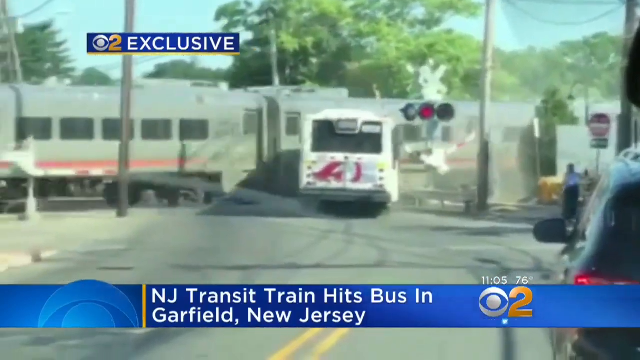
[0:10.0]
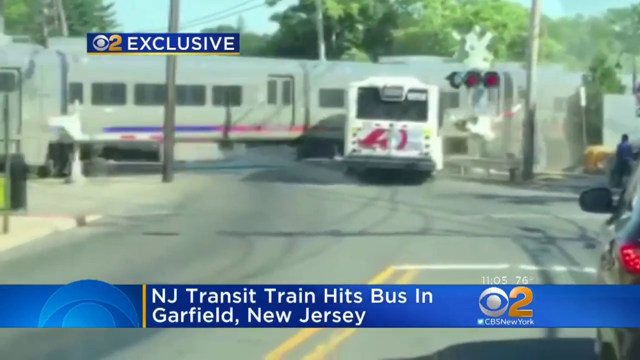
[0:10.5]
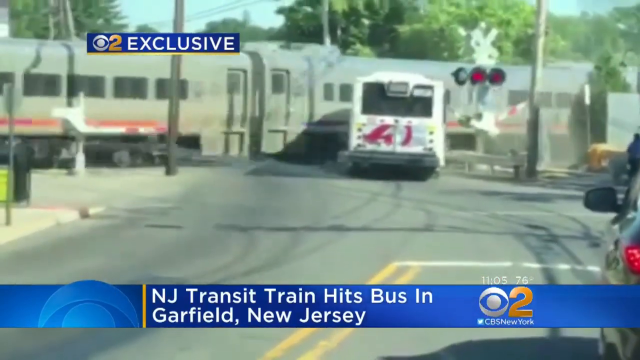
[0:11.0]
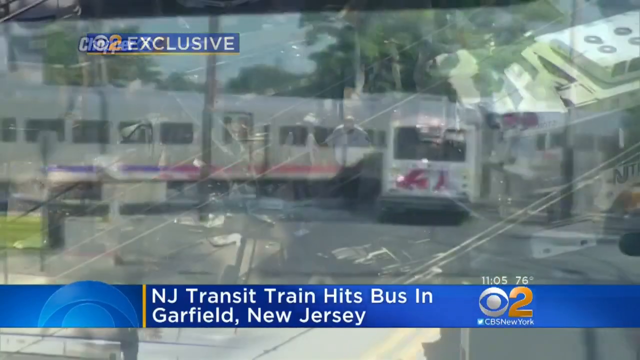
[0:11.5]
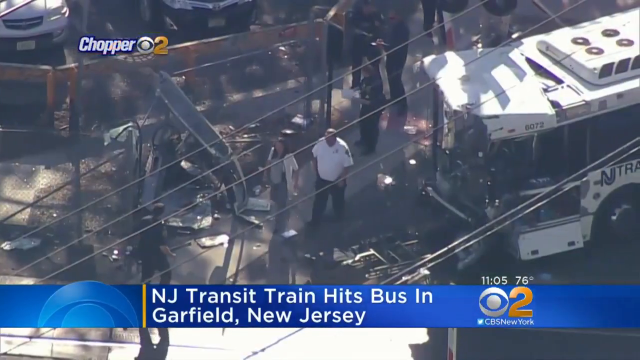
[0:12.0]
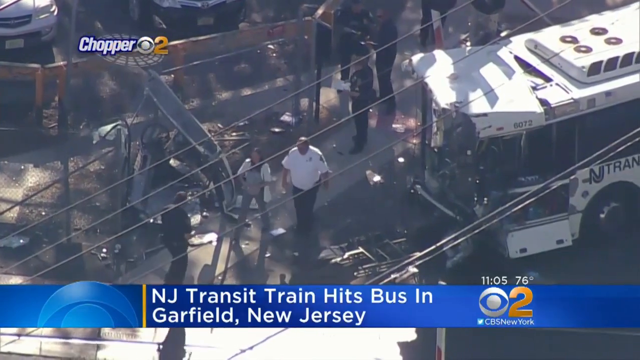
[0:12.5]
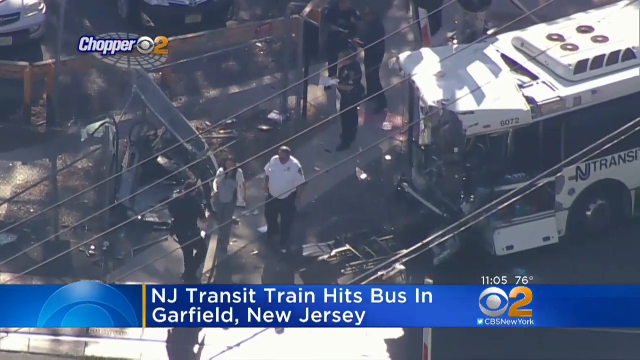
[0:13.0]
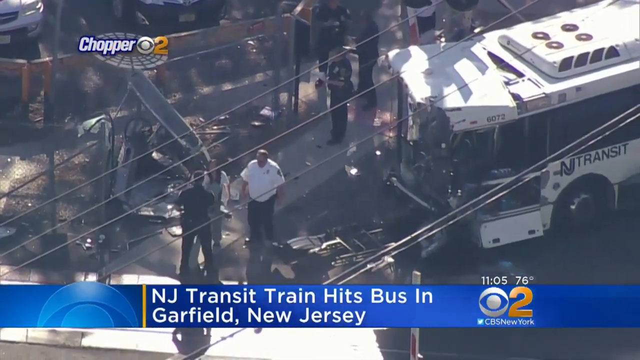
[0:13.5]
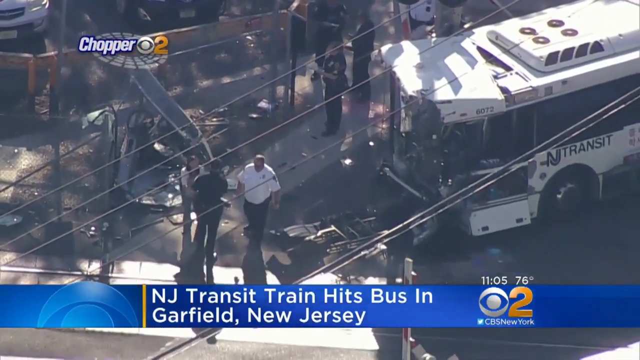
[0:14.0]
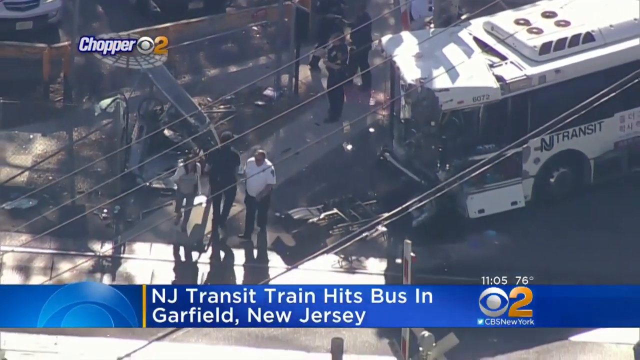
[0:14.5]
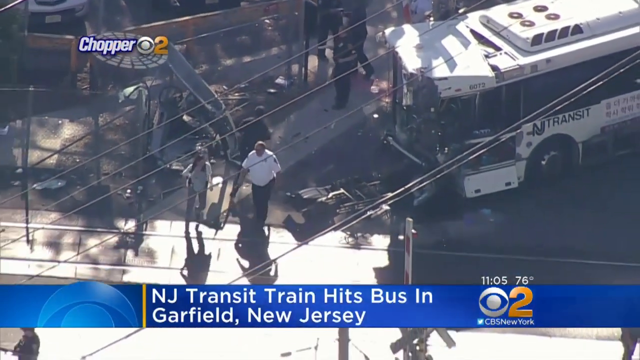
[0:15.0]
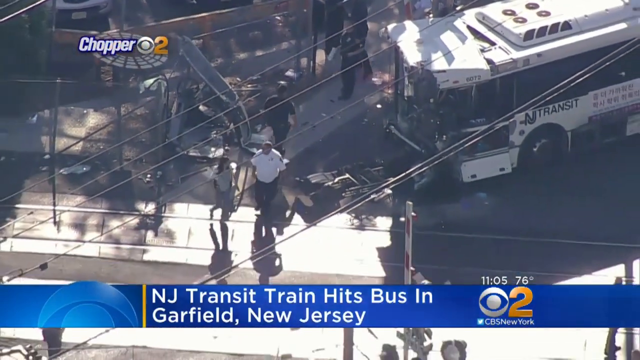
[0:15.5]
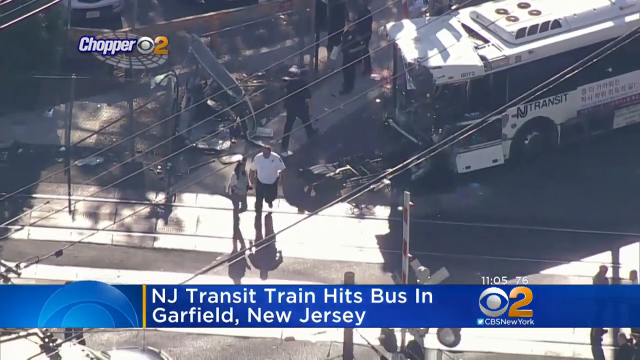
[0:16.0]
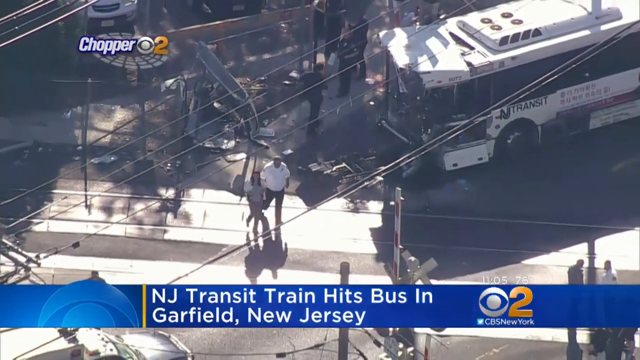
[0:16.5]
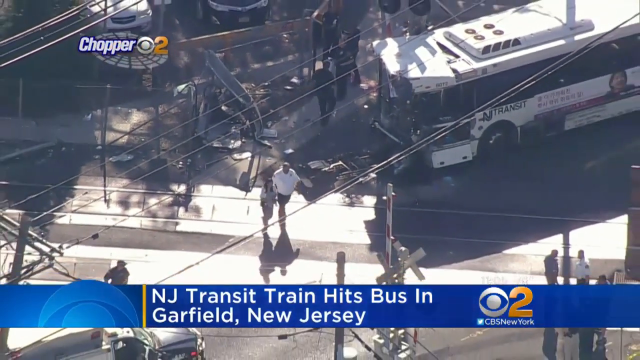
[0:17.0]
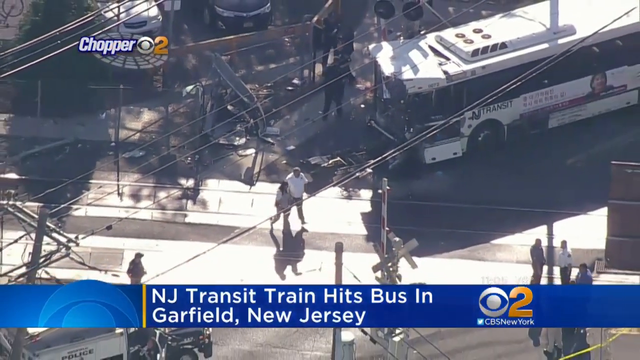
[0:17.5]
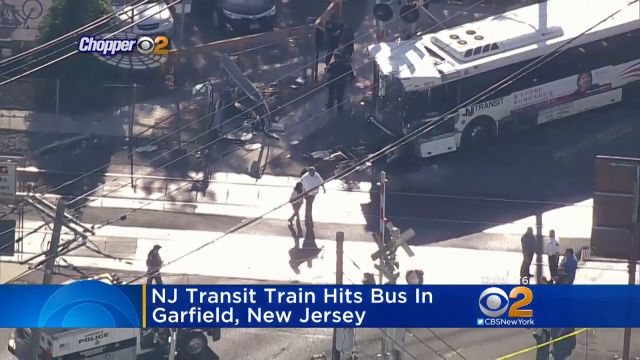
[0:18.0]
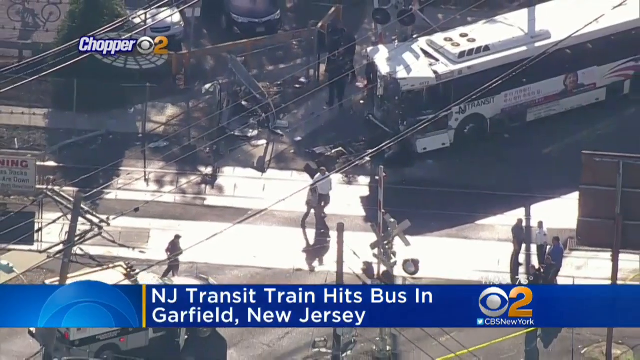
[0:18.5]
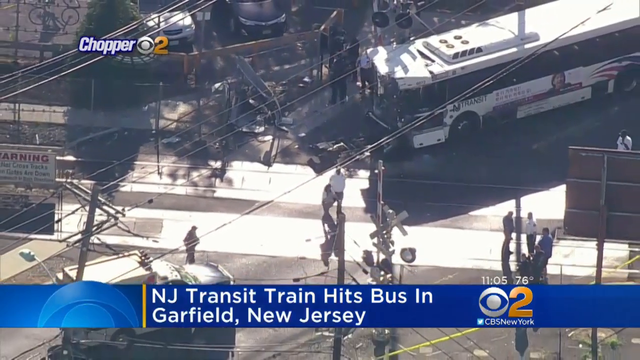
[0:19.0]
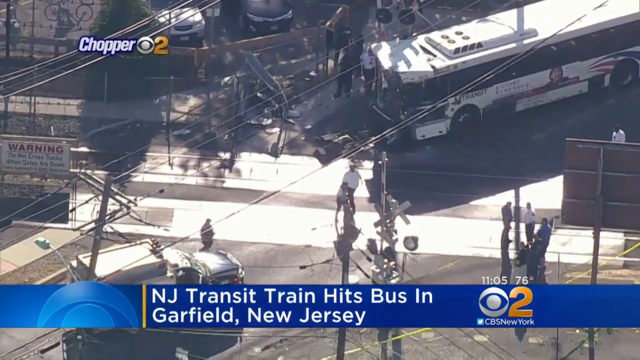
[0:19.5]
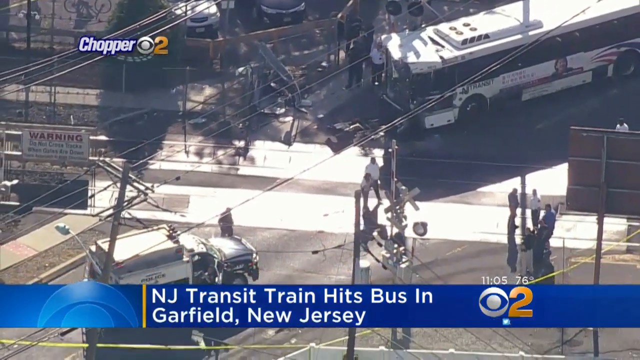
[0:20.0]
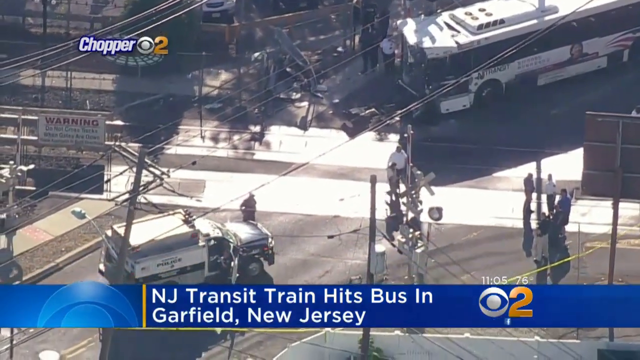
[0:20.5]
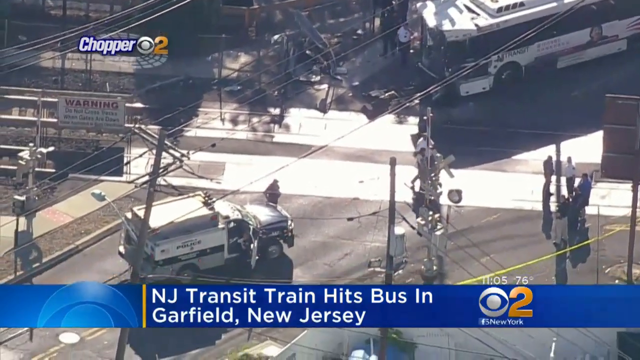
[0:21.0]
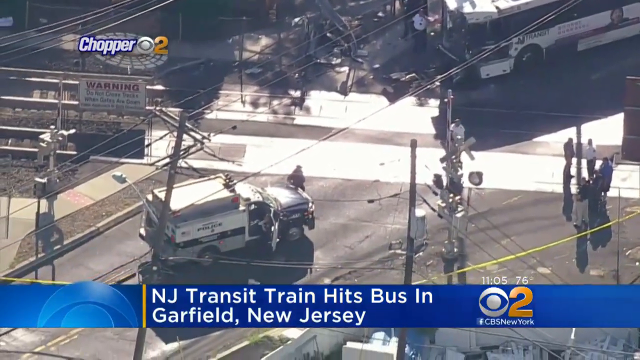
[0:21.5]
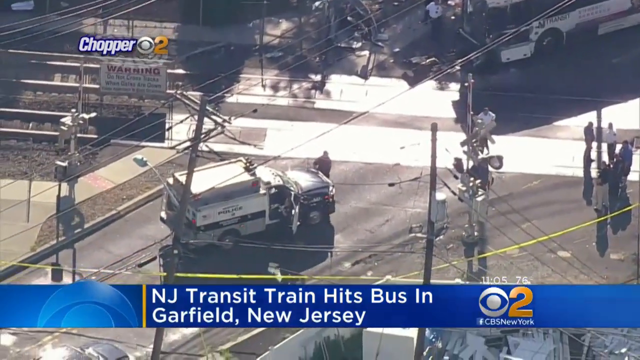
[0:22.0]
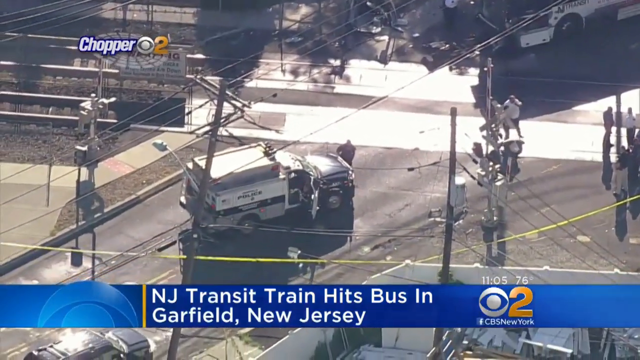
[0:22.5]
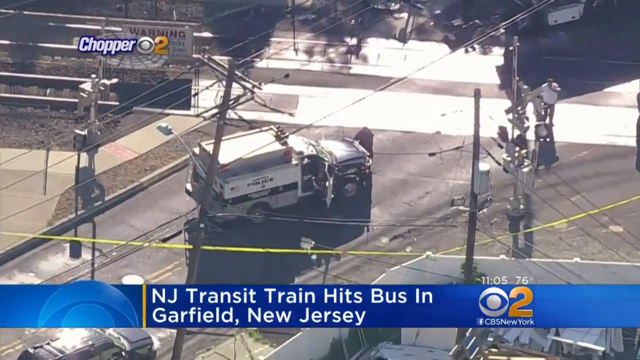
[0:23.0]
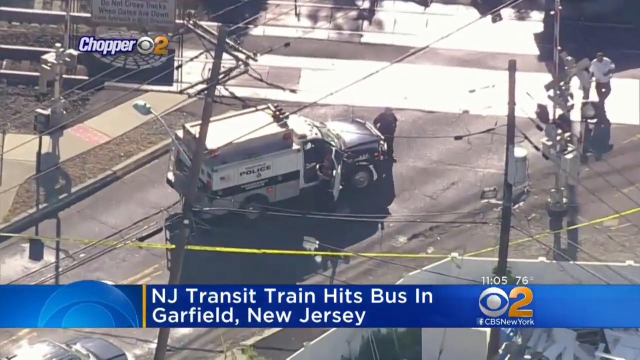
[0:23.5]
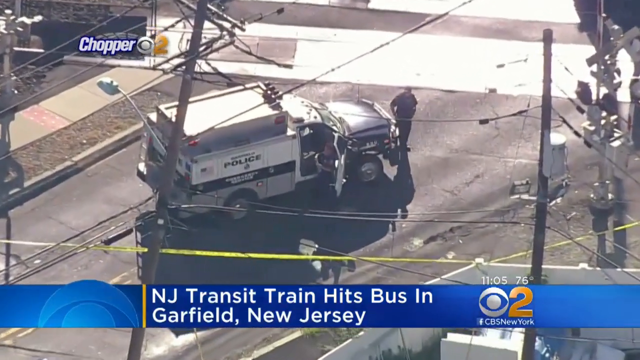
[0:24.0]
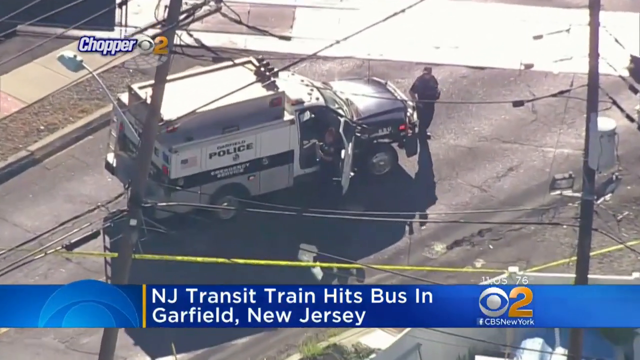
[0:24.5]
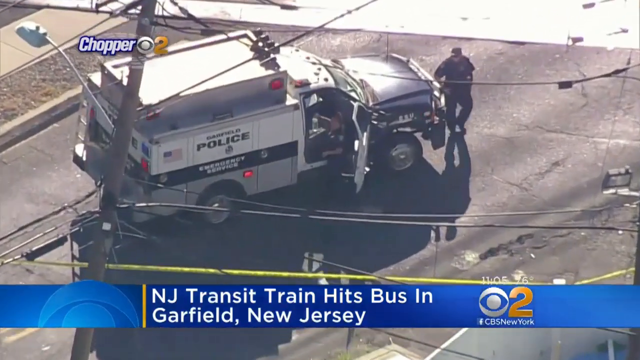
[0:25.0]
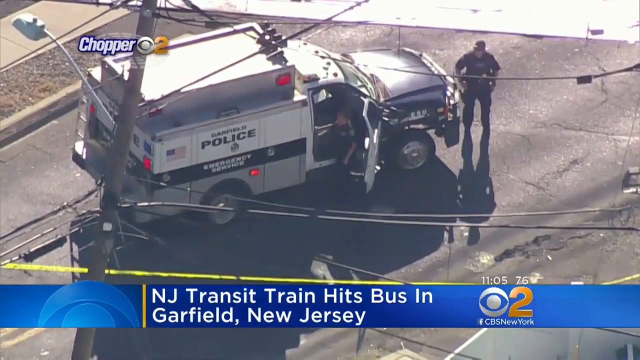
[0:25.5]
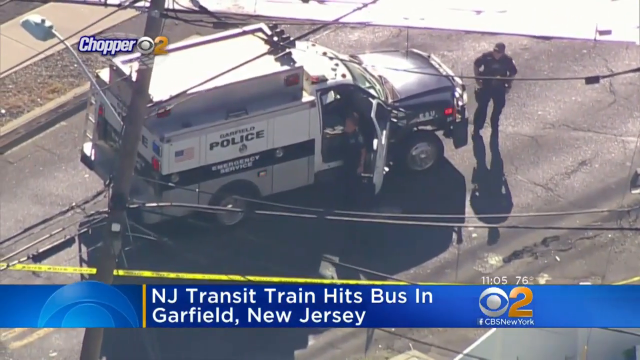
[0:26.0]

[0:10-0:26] The CBS2 exclusive news segment continues, its title naming "NJ Transit" and Gatwick, New Jersey. The white NJ train passes behind bus number 41 at a railroad crossing. The crossing barriers are lowered, utility poles line the street, and green trees are in the background. The incident appears to be in motion, suggesting the collision is just happening or unfolding. The video shifts to an aerial perspective captured by Chopper 2. From above, the crash site shows multiple emergency vehicles, including police cars. Two people are walking: one is a policeman, and the other is explaining something using gestures. The bus and the train remain positioned on the same tracks, and several responders are actively moving around the scene.